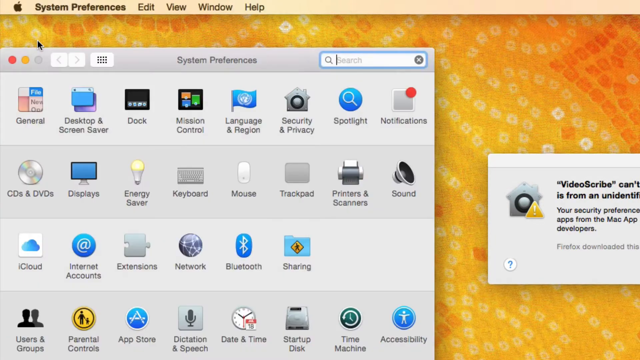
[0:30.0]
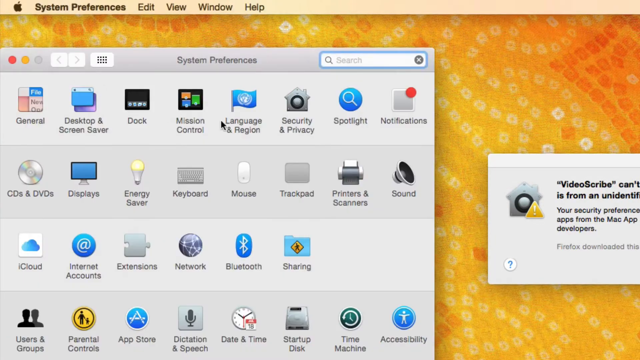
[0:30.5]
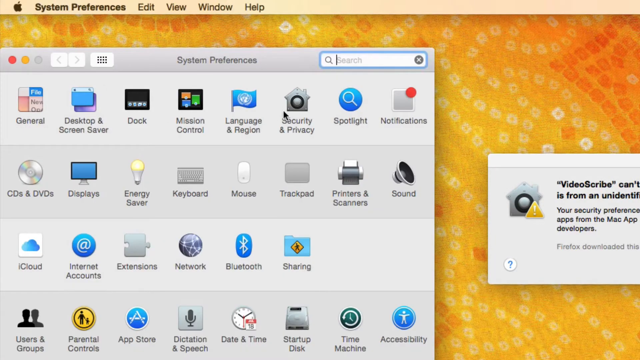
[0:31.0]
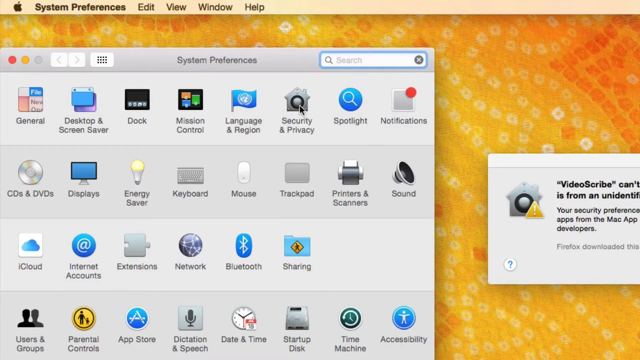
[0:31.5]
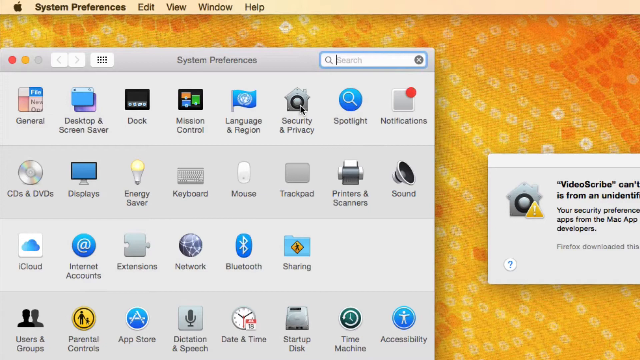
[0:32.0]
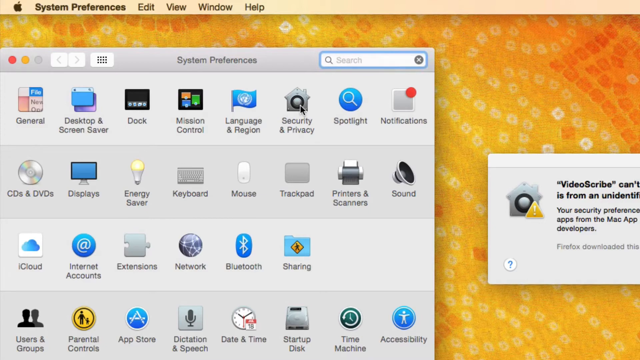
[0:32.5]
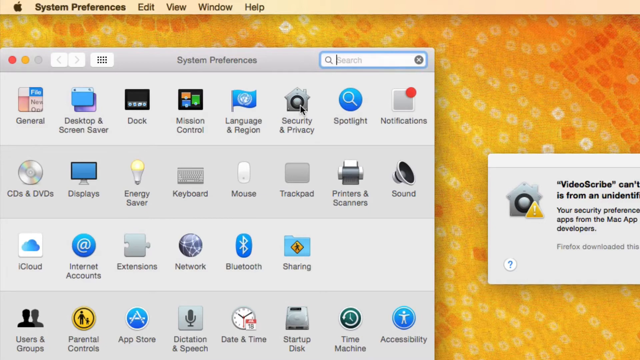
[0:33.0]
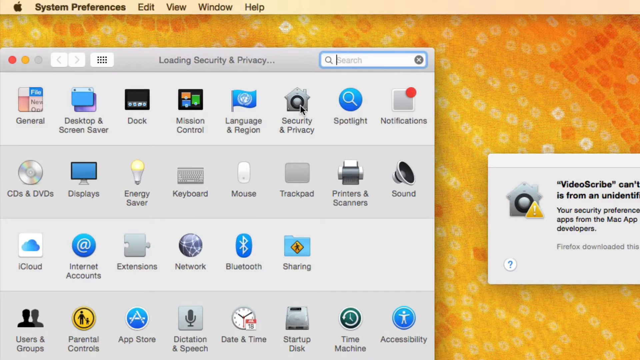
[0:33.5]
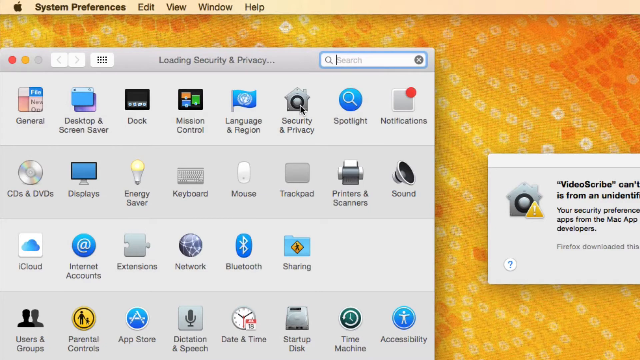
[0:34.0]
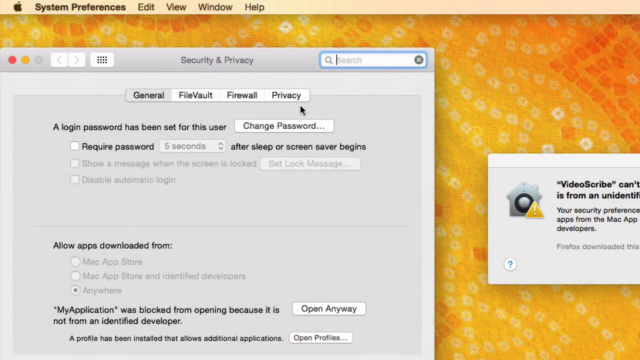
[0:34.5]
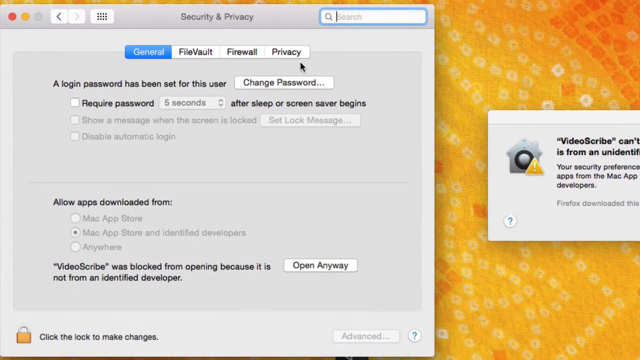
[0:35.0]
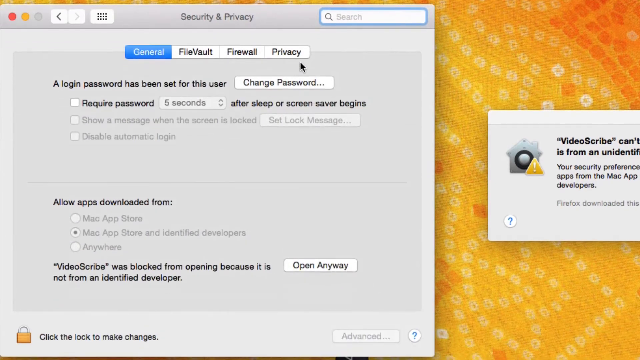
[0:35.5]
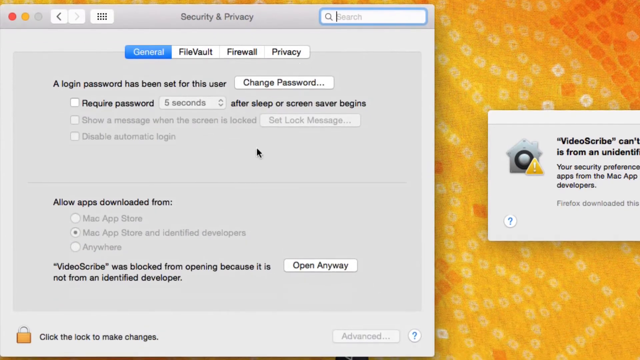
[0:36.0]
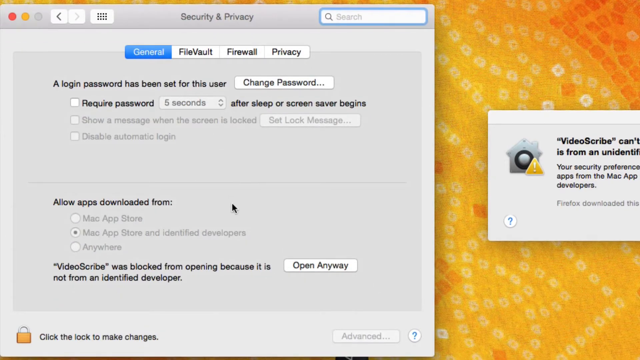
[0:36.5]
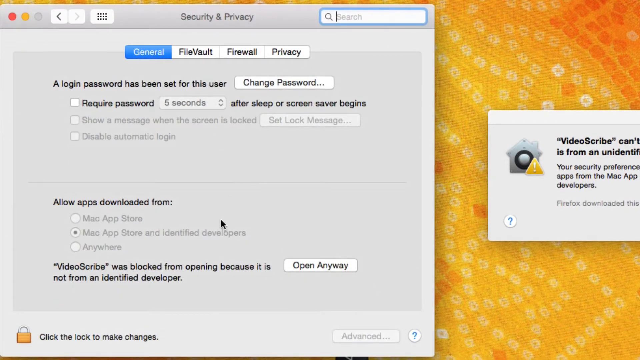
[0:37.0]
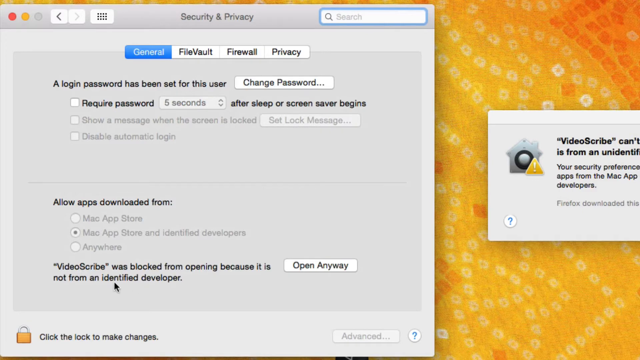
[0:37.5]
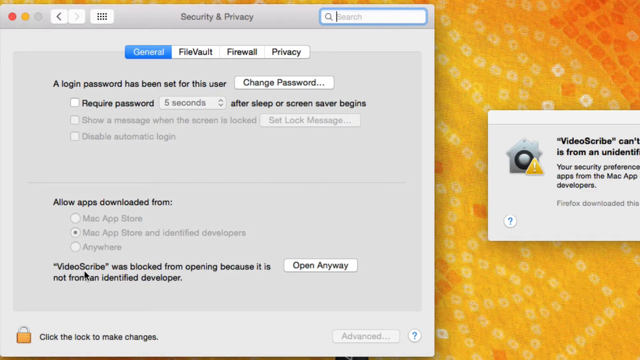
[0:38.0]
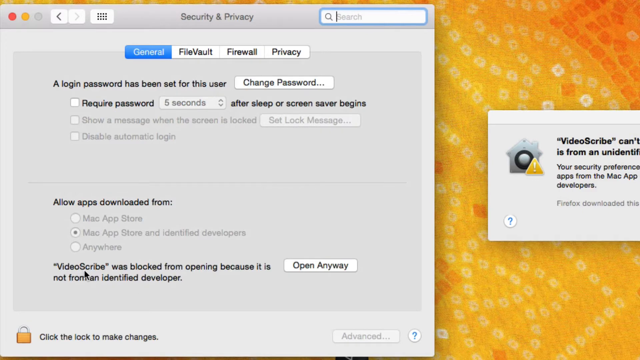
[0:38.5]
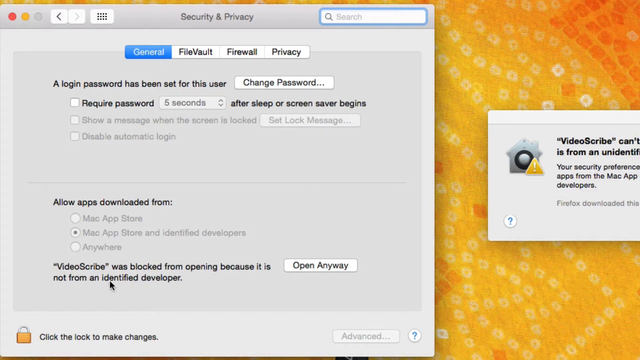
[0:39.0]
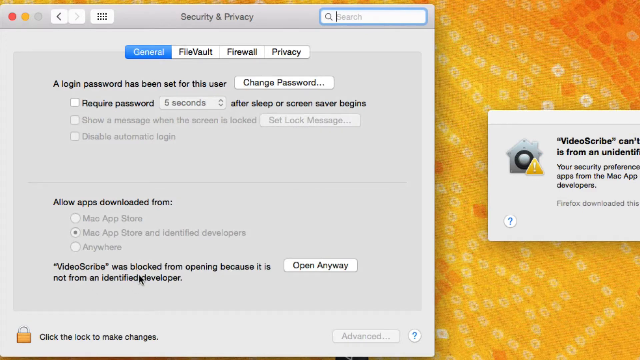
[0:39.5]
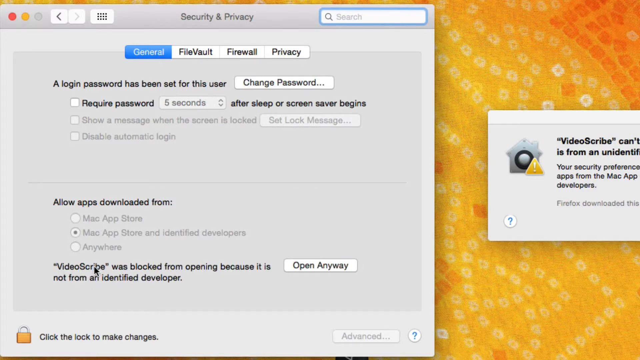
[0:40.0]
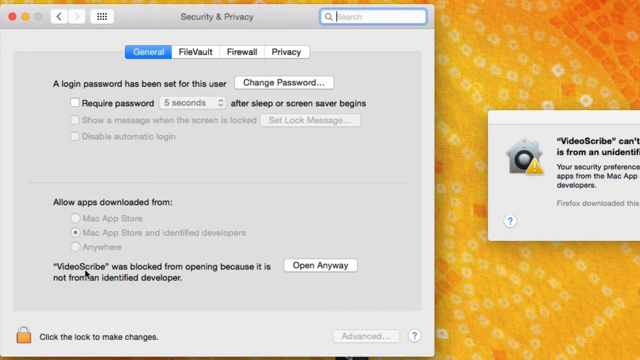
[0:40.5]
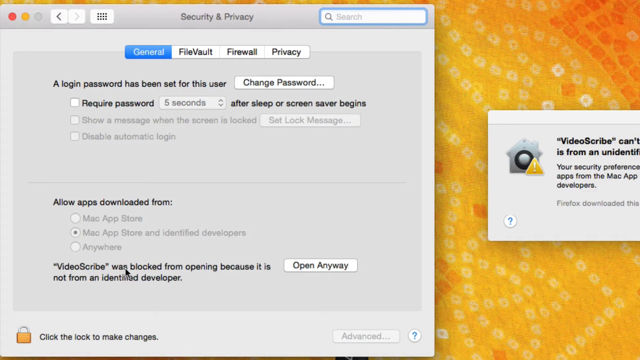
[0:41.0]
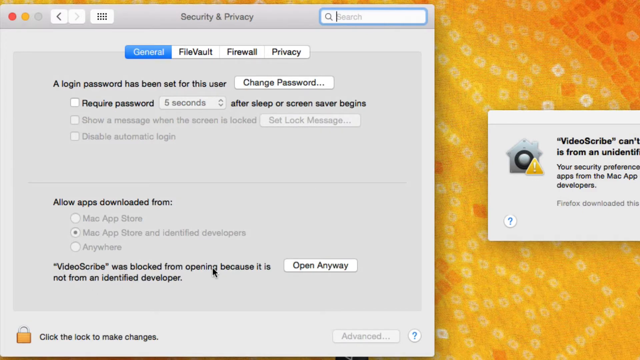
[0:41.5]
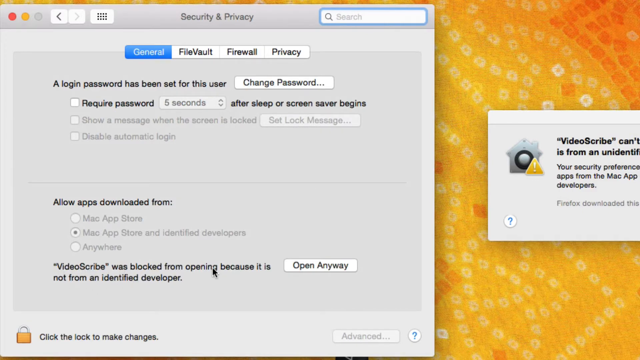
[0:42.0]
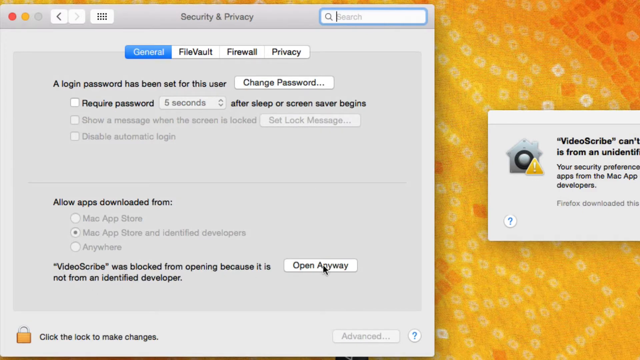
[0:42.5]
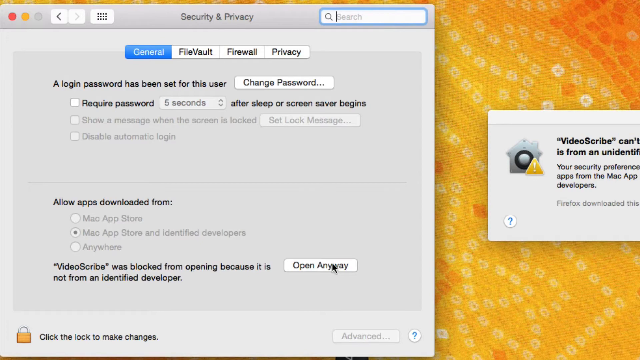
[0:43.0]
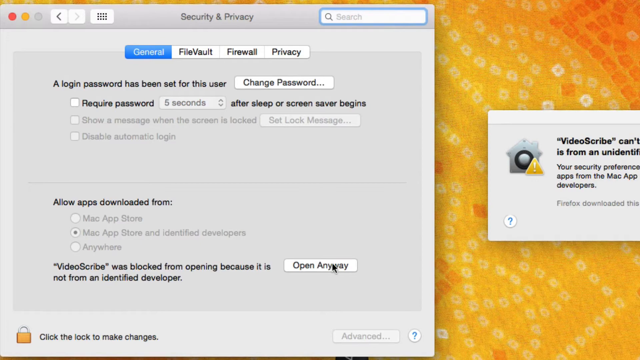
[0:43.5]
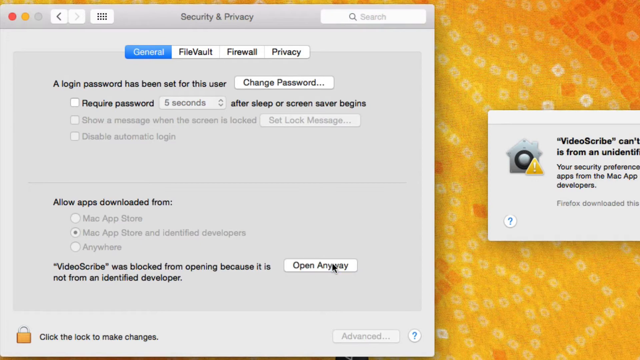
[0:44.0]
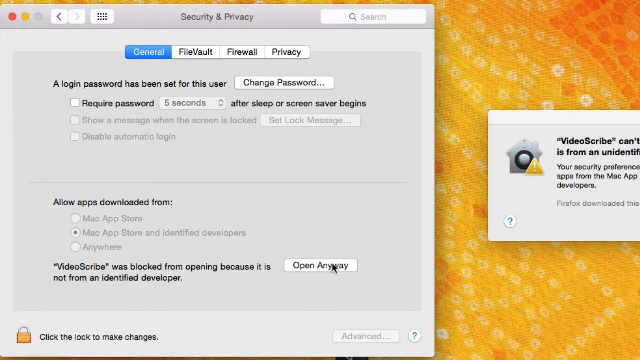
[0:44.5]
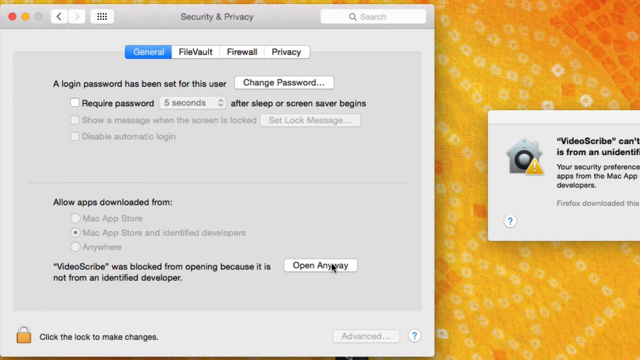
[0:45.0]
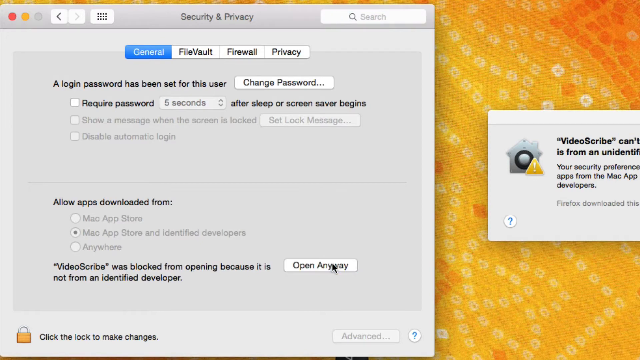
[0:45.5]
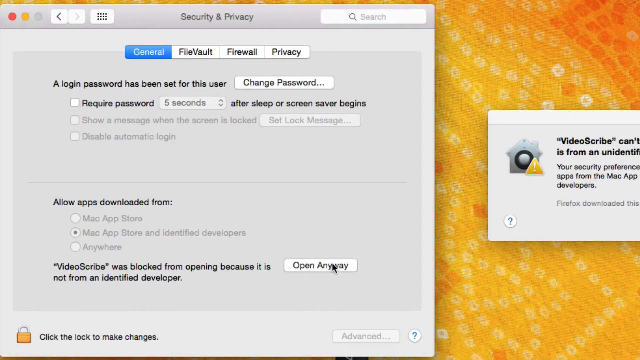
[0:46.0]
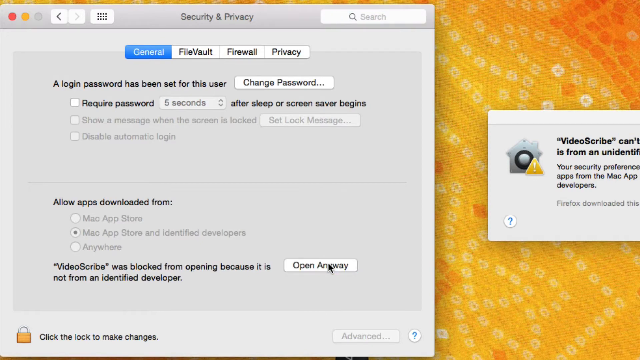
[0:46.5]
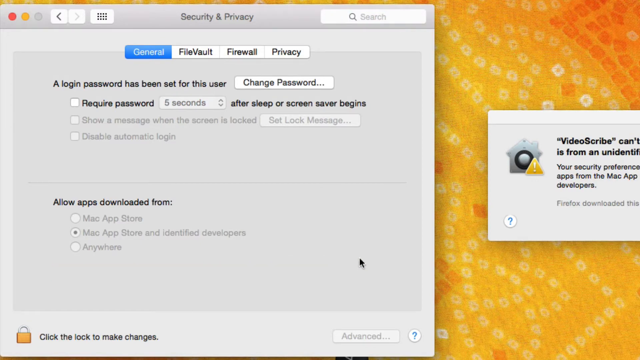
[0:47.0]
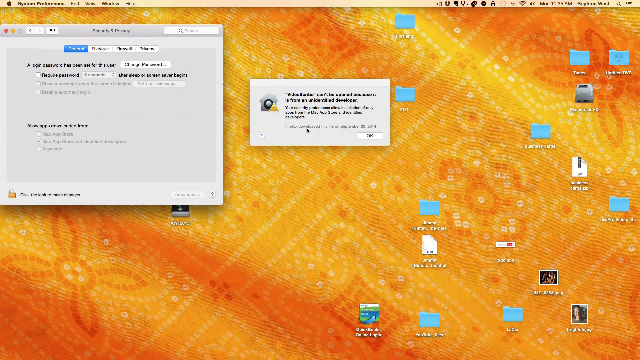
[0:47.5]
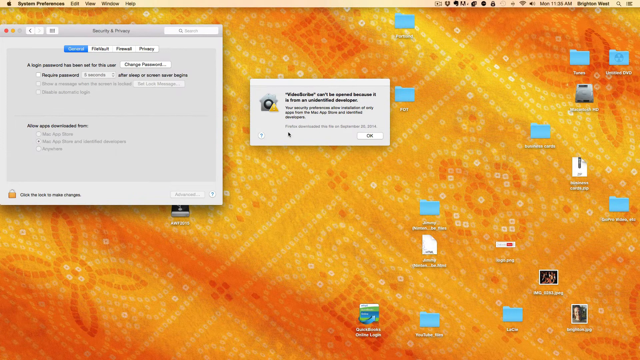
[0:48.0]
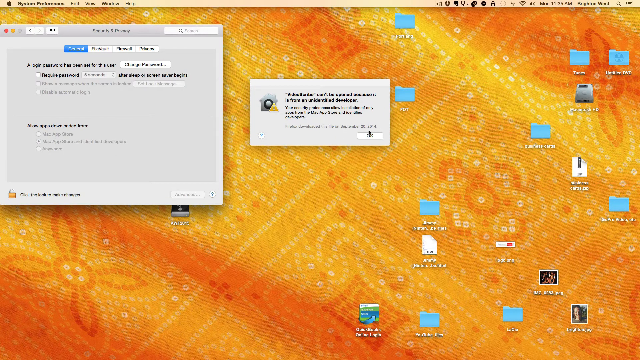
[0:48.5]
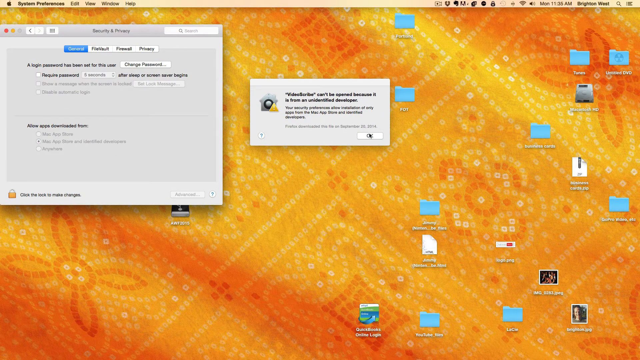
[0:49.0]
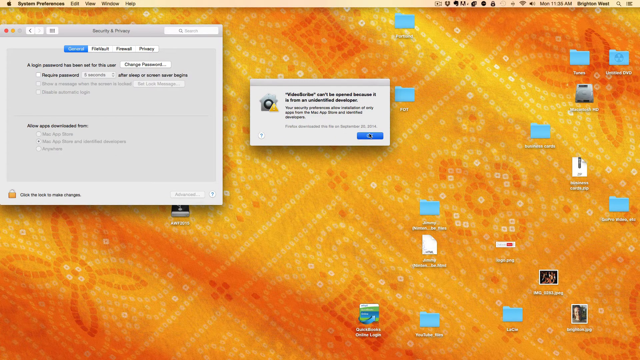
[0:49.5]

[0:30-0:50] The user moves to Security & Privacy to change the settings. The Security & Privacy window shows General, Firewall and Privacy sections, along with a login password setting for the user. The user goes to the "allow apps downloaded from" section, where there is information that VideoScribe was blocked from opening because it is not from an identified developer. The user activates the setting that allows the software to run even though it was downloaded from a third-party source.